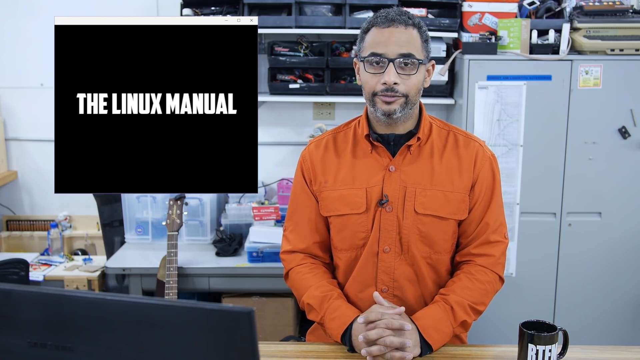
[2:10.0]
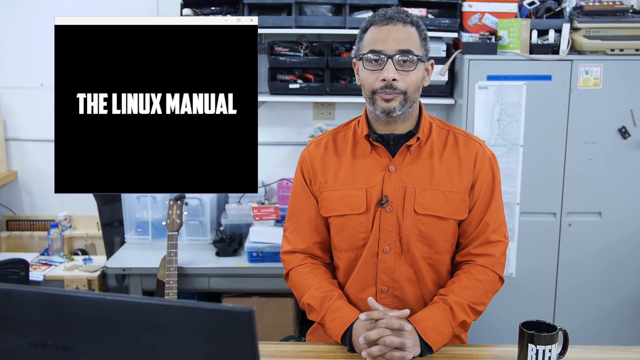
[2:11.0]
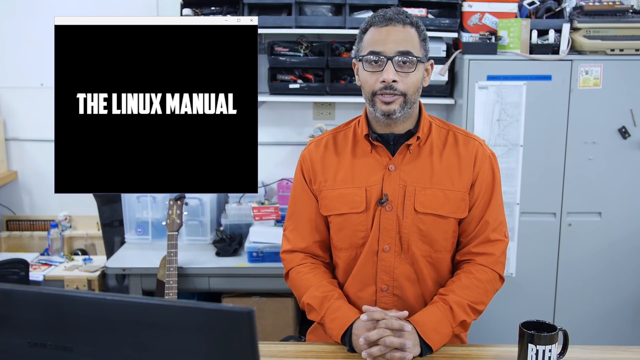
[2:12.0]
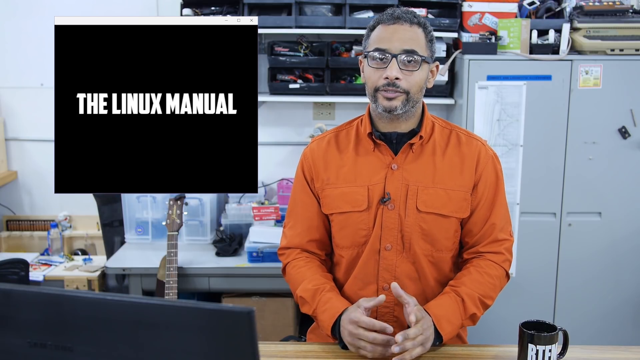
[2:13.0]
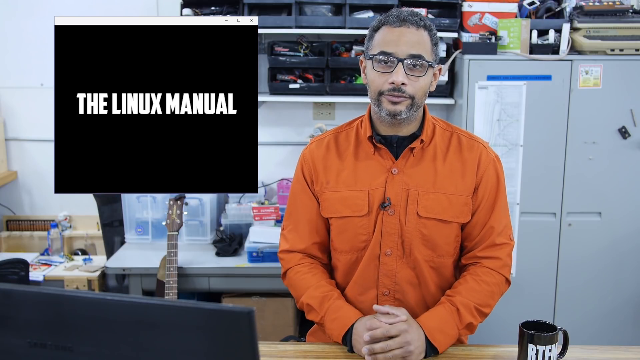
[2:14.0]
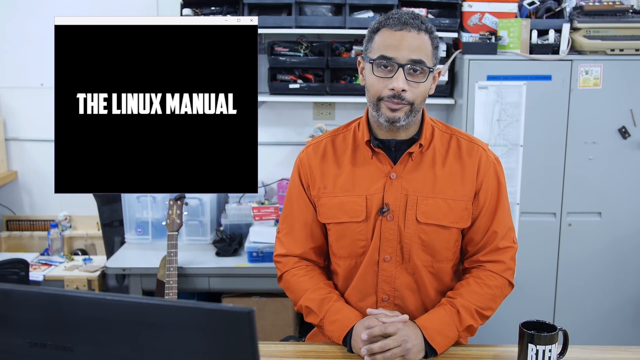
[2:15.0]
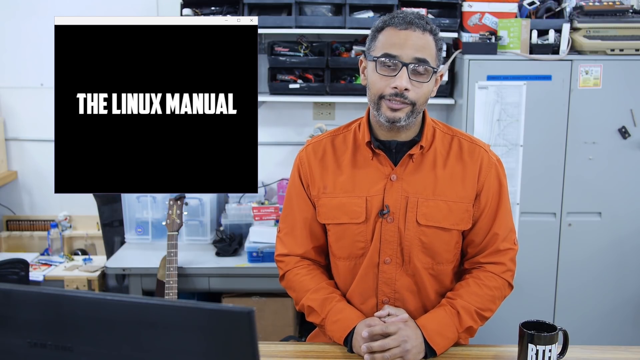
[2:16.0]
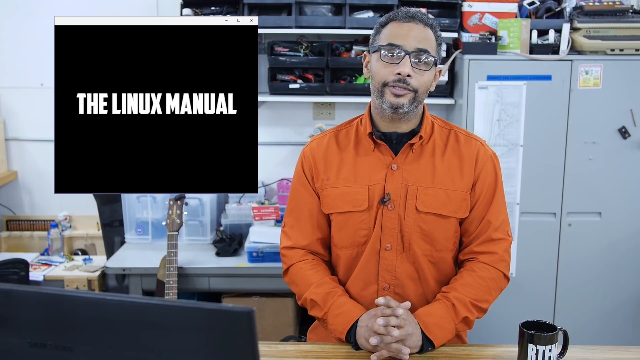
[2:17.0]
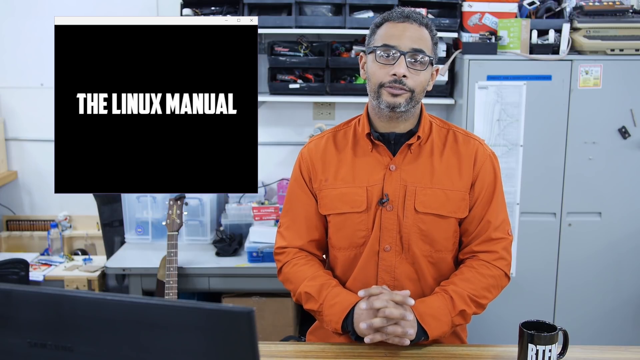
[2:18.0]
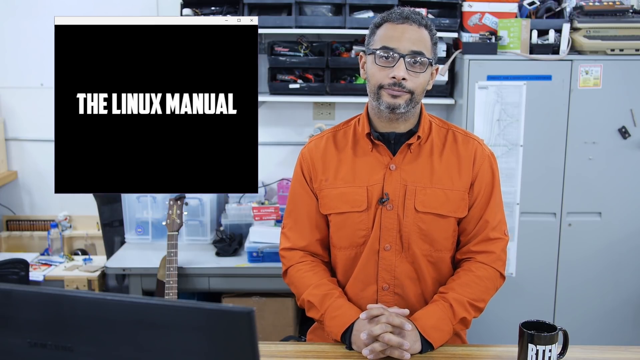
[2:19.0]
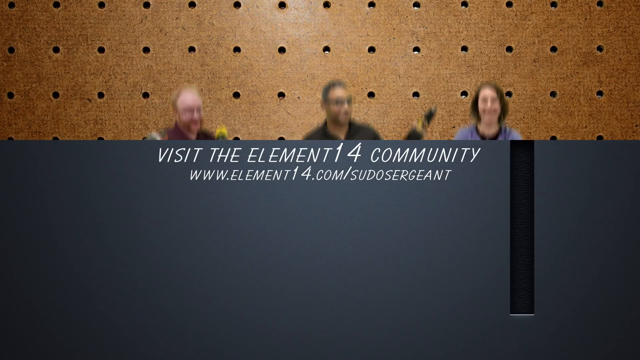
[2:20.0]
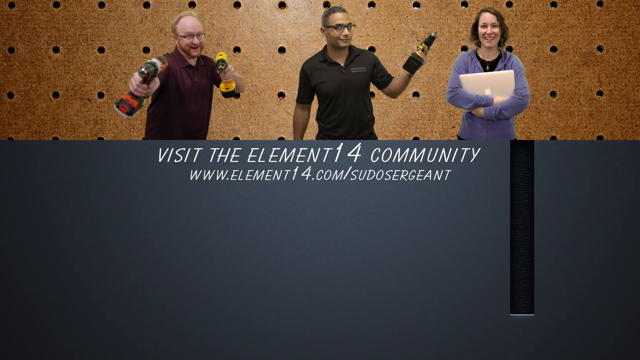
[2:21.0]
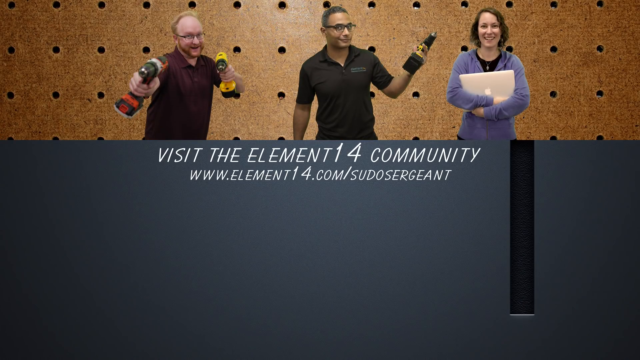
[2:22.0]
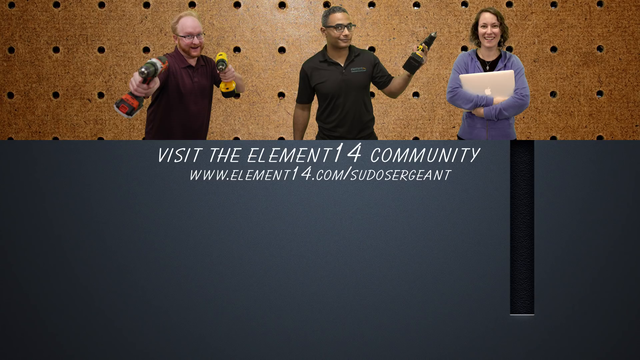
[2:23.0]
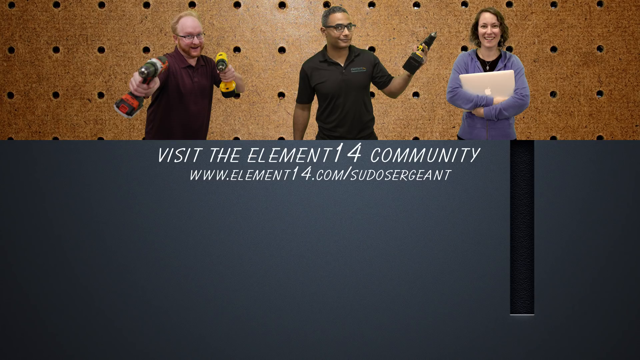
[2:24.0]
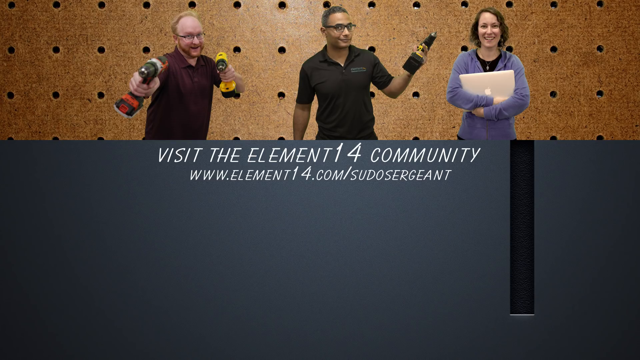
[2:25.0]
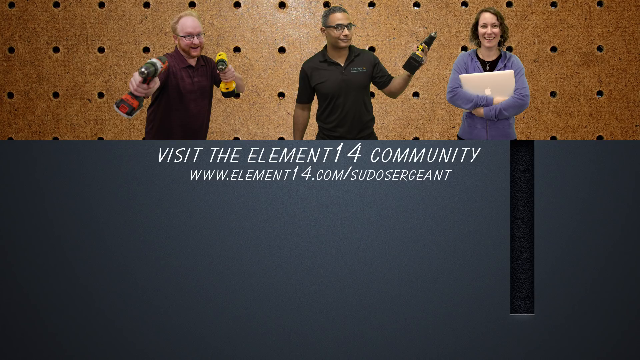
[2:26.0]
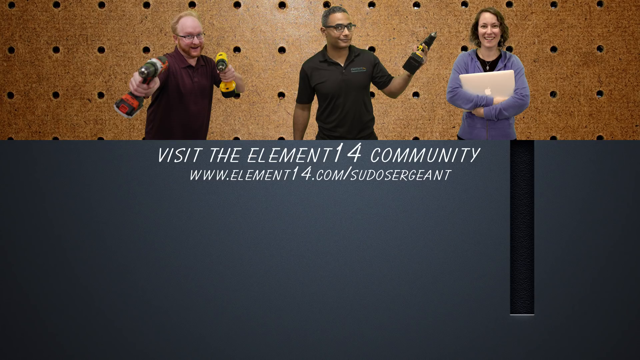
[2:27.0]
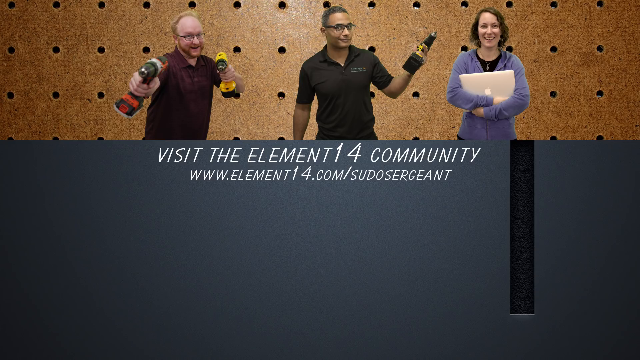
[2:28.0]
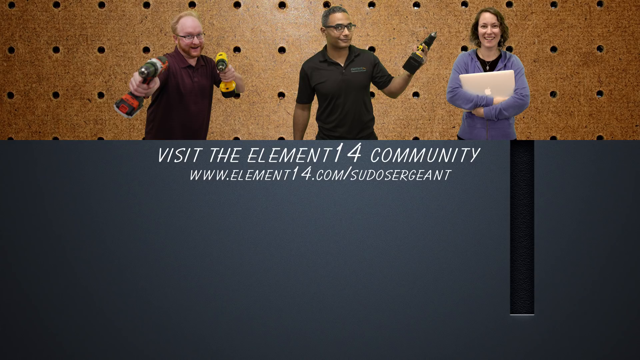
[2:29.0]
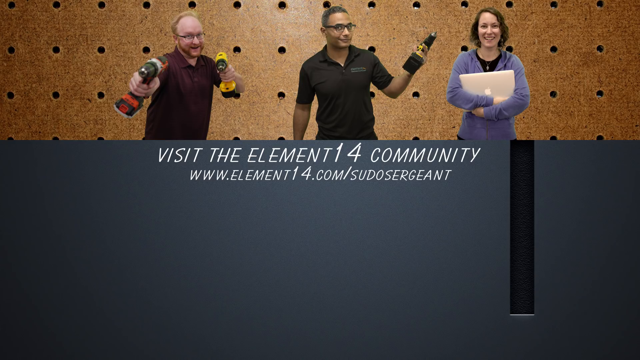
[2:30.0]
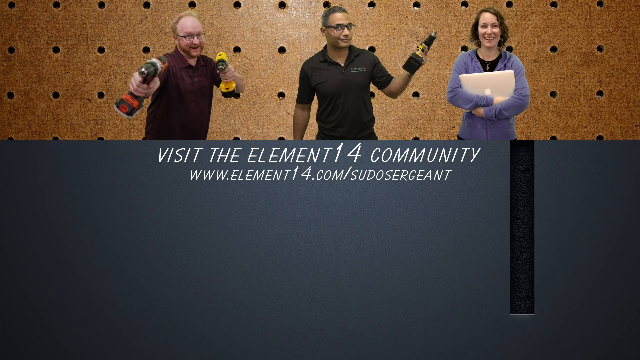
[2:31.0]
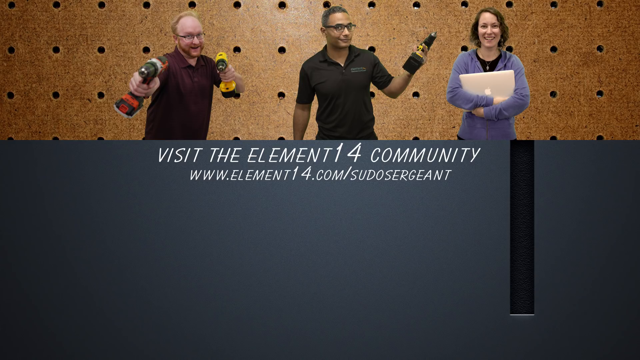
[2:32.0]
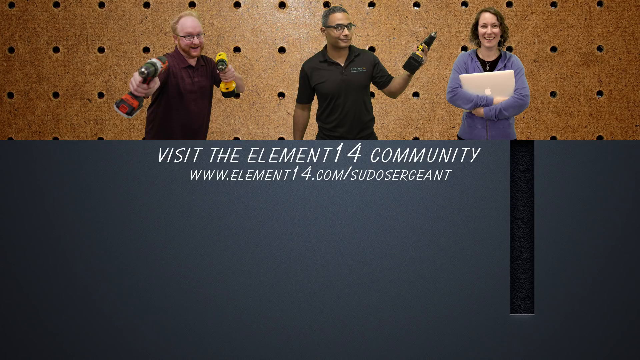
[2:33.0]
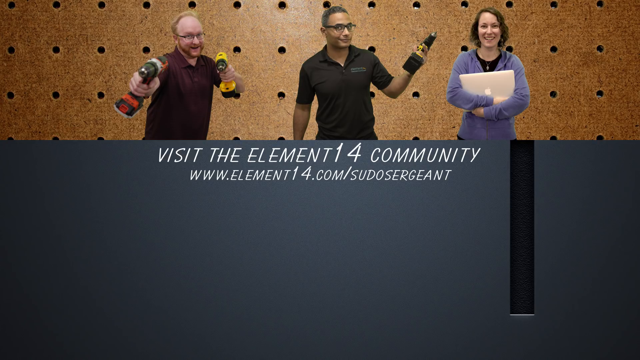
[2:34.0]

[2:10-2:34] The individual has his hands folded and resting calmly on the table, and looks like he is still explaining casually. The view then moves to what seems to be a slide reading "visit the element 14 community, www.element14.com/pseudo sergeant." Three individuals appear. One is the person doing the explaining, without a beard here, holding a yellow power drill in his left hand. To his right is a balding white man holding two drills in an action pose. A woman holds what looks like a laptop, maybe a MacBook, hugging it, and is smiling.